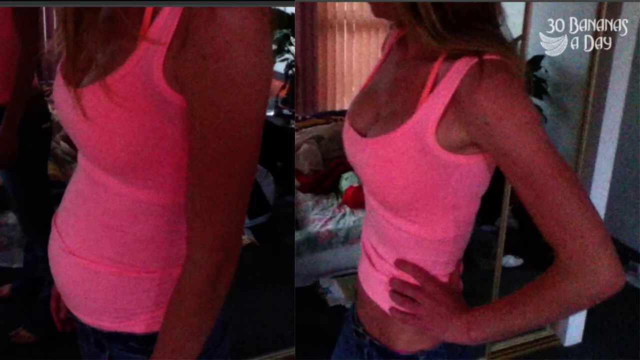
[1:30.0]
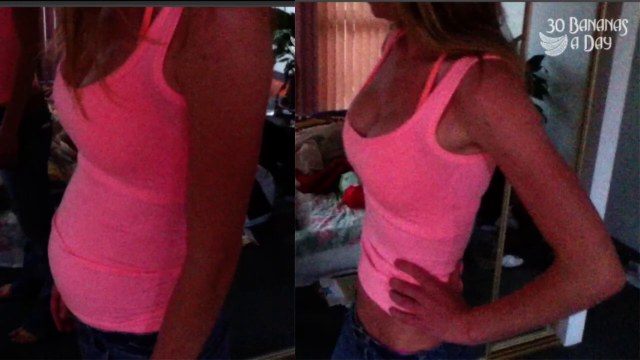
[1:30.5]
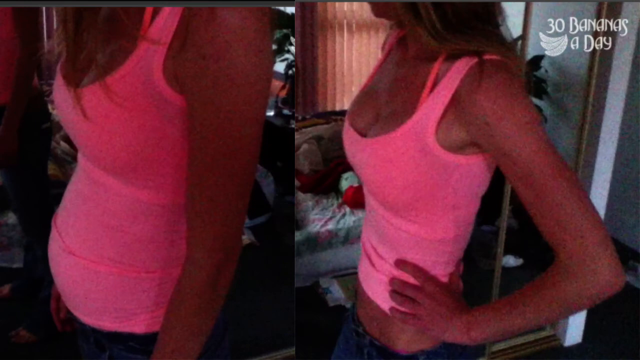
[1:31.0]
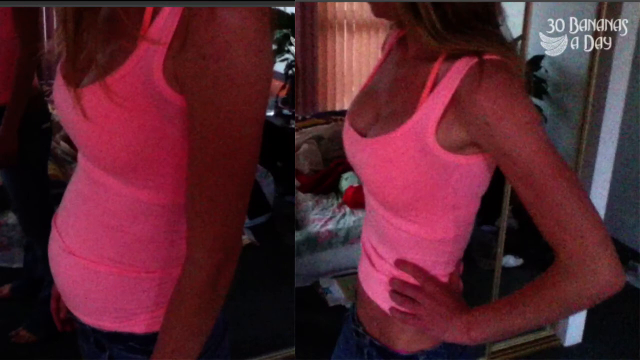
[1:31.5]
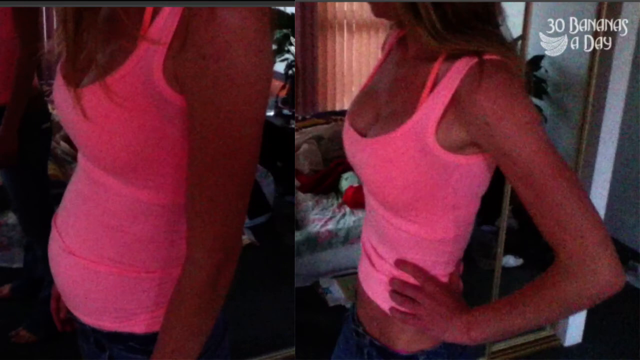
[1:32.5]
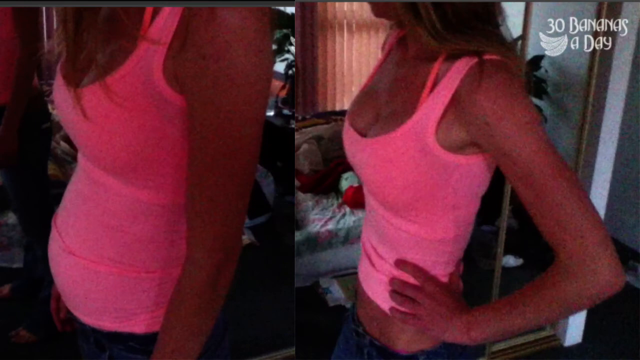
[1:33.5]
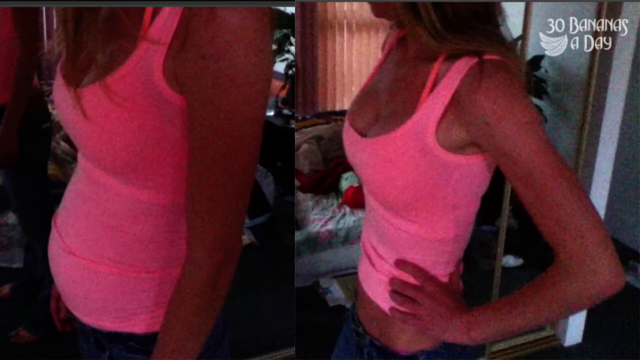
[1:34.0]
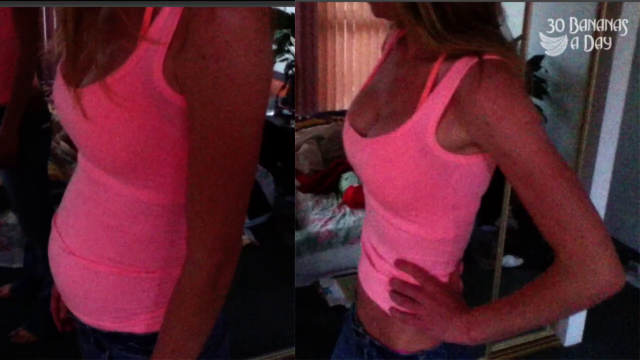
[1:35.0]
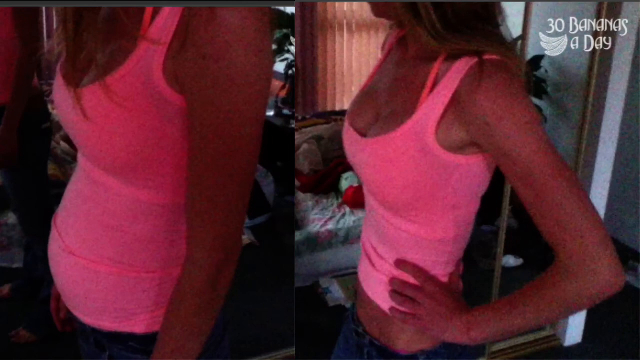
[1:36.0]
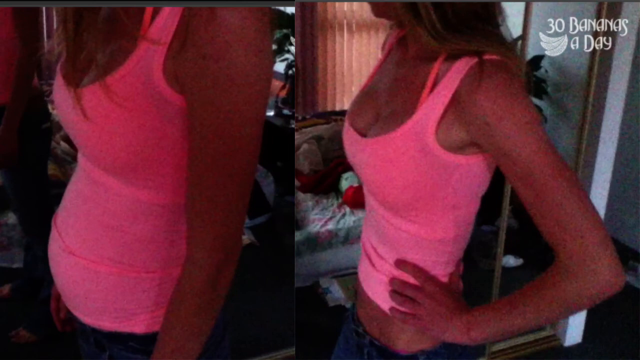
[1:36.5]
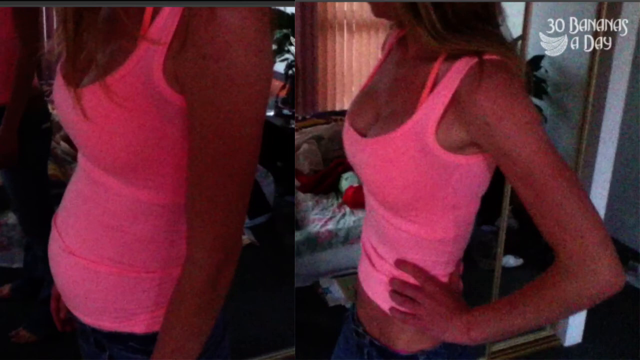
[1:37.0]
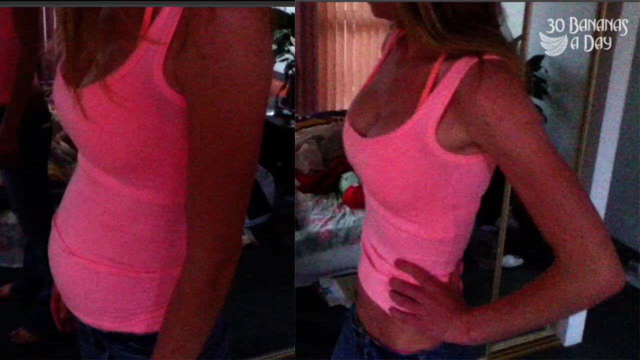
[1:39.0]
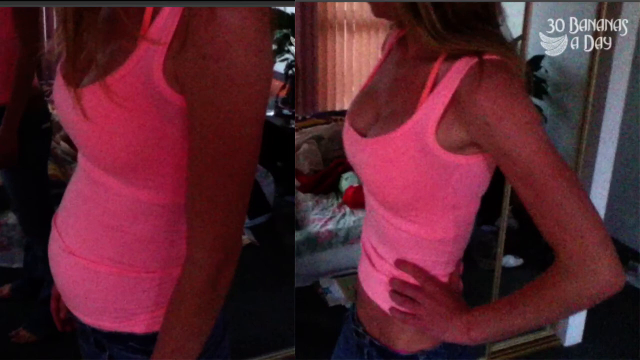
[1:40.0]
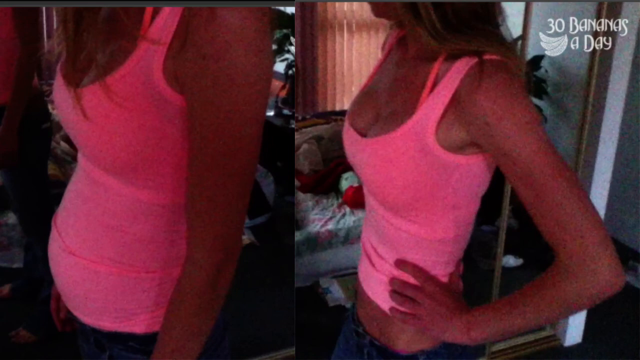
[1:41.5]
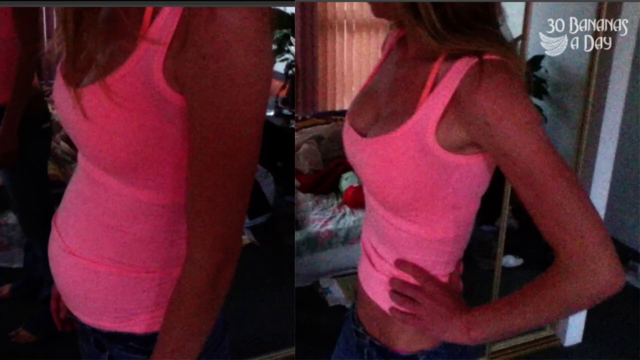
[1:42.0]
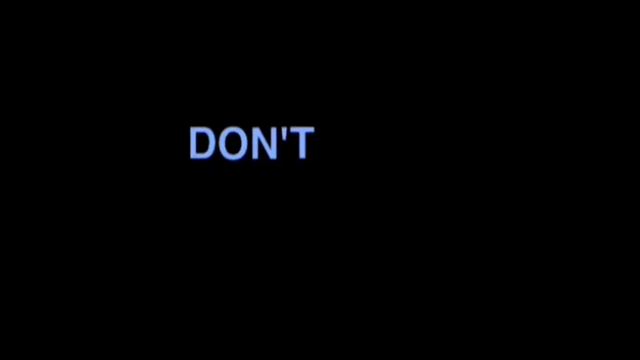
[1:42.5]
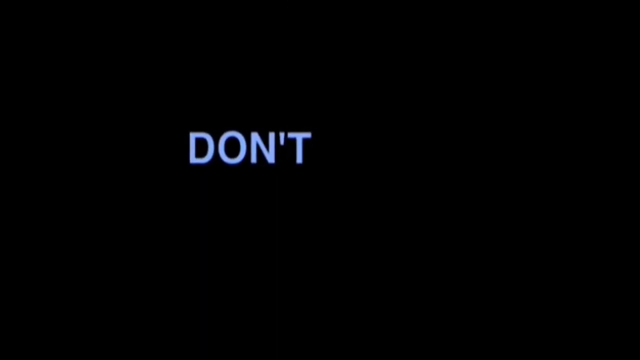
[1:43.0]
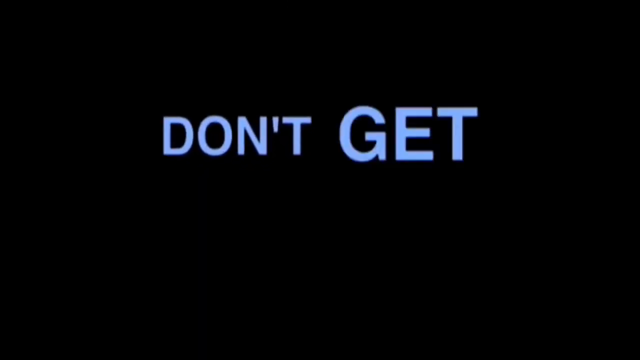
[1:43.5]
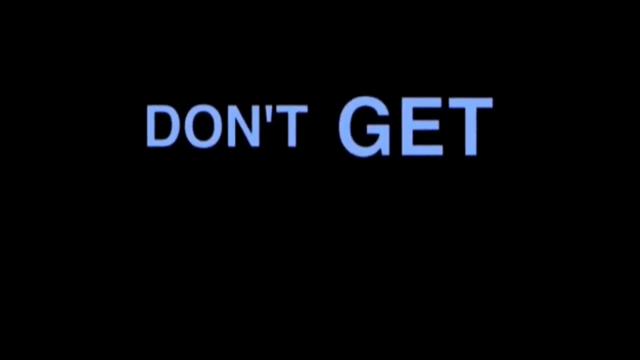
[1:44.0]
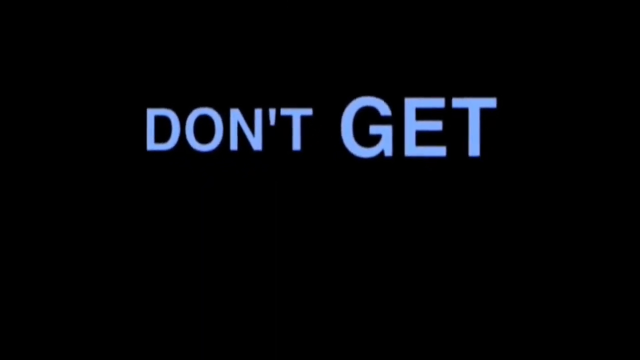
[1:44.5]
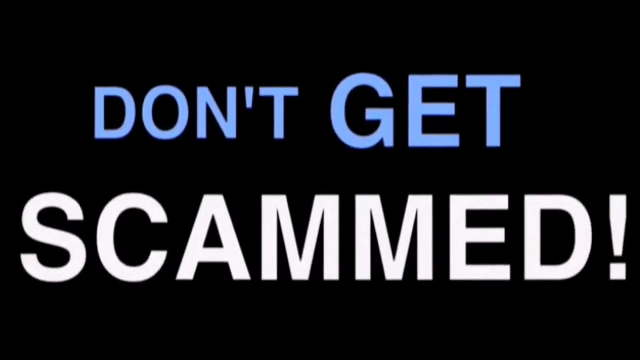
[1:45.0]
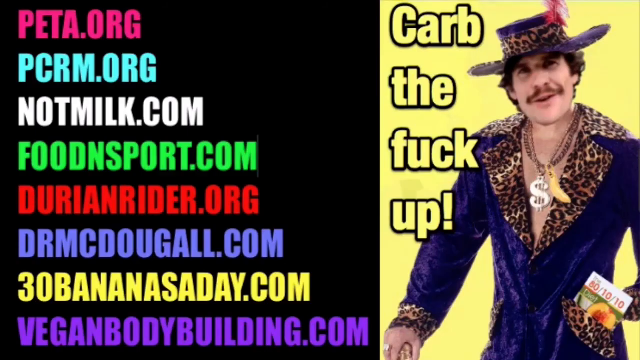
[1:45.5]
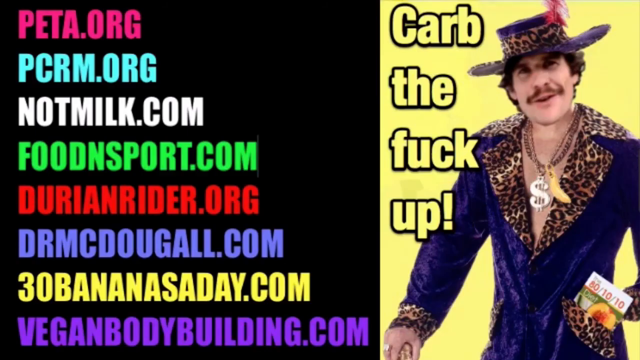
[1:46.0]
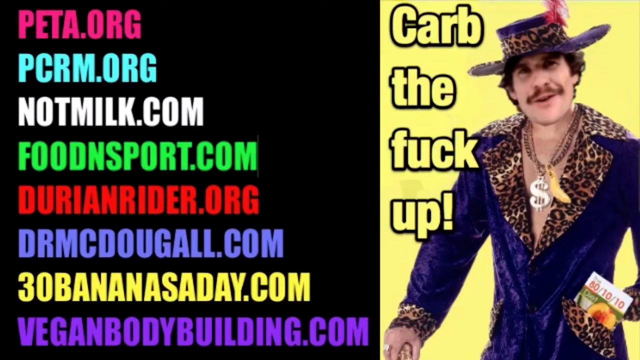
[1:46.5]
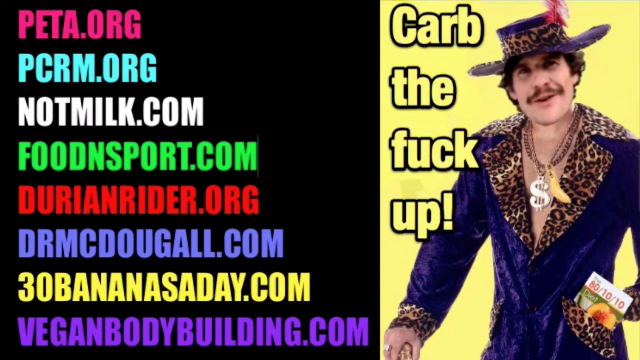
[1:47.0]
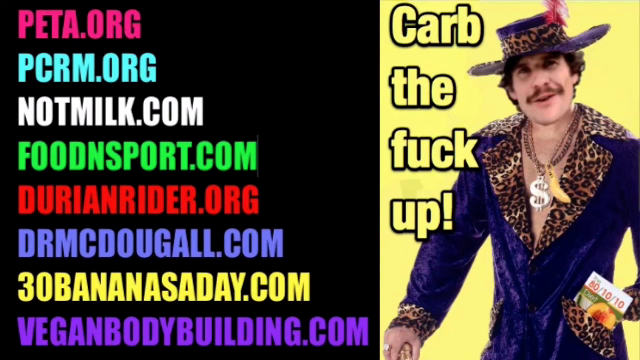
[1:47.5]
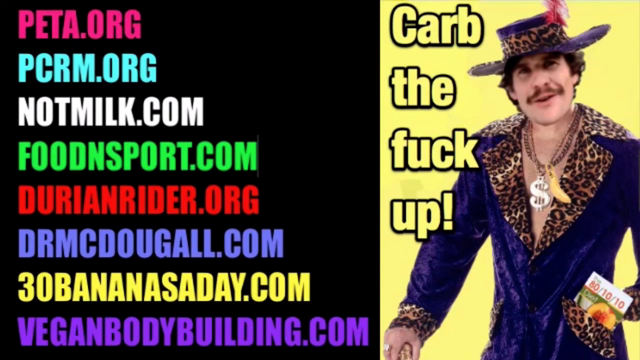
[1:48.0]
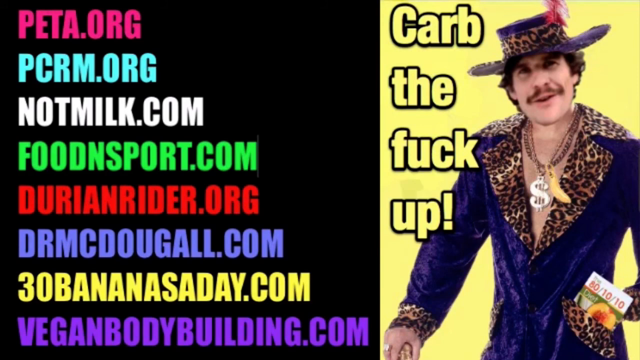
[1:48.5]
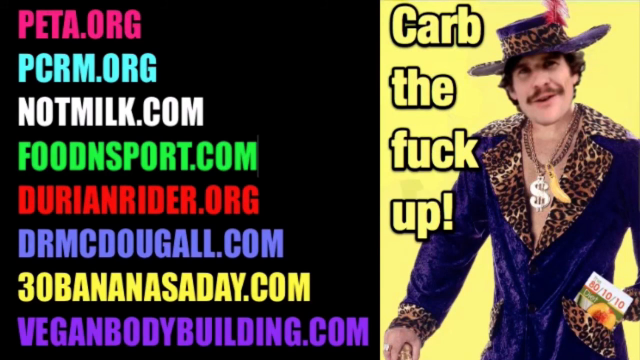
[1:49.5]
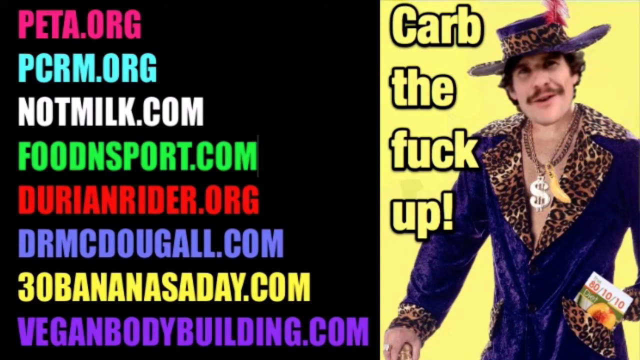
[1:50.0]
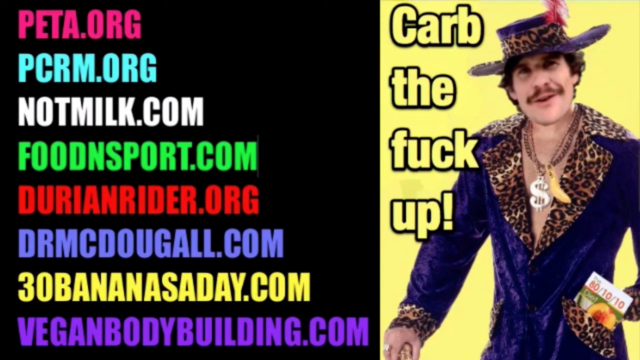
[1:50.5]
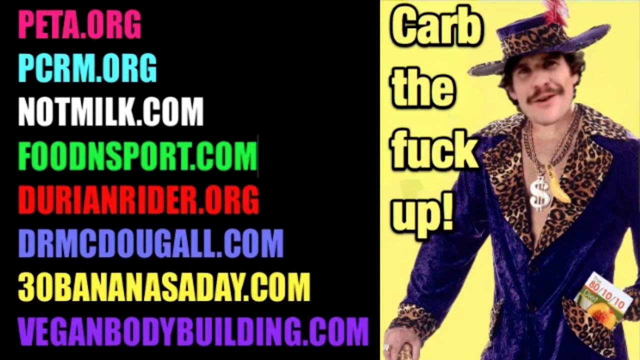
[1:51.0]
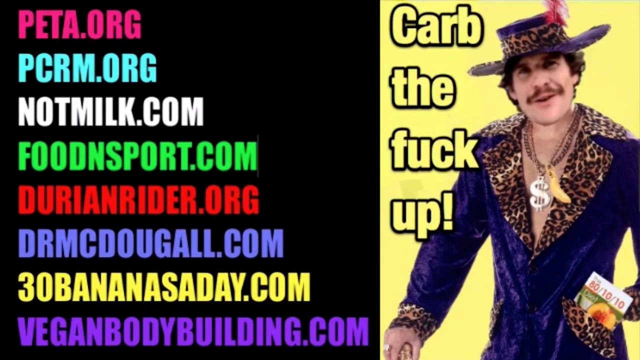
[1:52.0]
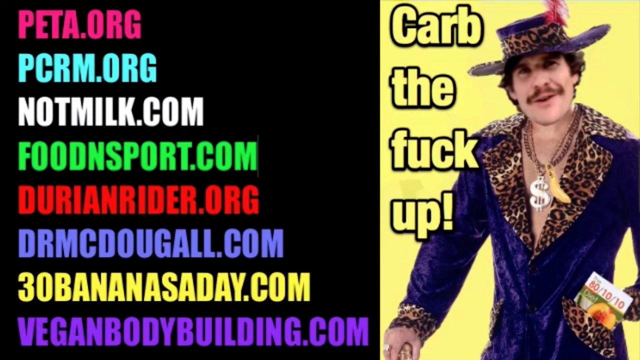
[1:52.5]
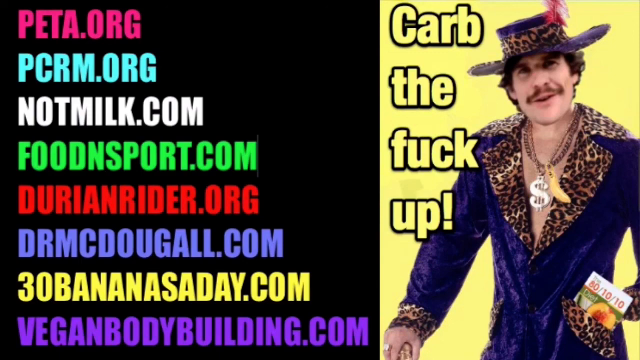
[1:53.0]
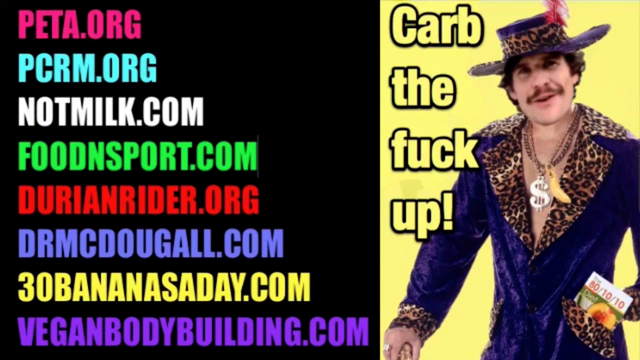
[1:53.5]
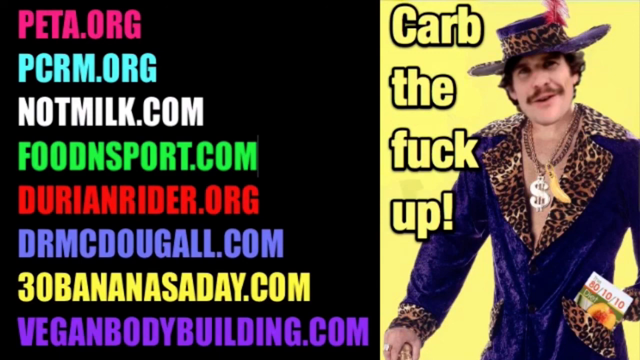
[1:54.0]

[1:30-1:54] A white woman wears a pink top with a pink strap around her neck and blue jeans, and has long brown hair. In the top right of the image on the right-hand side, text says "30 bananas", followed by an image of three bananas and "a day". A mirror with a brown, goldish frame is on her right side, reflecting brown and light brown shades covering the window and a white bed with clothing strewn all over it. The carpet seems to be blue, and there is a white wall on the right side. The image on the left shows the same person in side view with a bit of a pouty stomach, while in the image on the right she has a more slimmed-down stomach. In the right image her hands are on her waist; in the left image her hands are by her side. The screen then goes black, and lettering appears: "don't get" in blue at the top and "scammed" in white below. On this black background, on the right side, there is a yellow box, and to the left of this box lettering in a black outline reads "carve that fuck up". On the right side is an image of a white man with a brown mustache and brown hair, wearing a purple jacket, a purple hat, and a leopard skin collar that is also strapped around his purple hat. A small booklet in his pocket has orange lettering reading "80/10/10", and he wears a silver dollar sign and a yellow banana around his neck. Lettering on the left side reads, line by line: "pita.org" in pink, "pcrm.org" in light blue, "notmilk.com" in white, "foodandsport.com" in lime green, "durinrider.org" in red, "drmcdougal.com" in light purple, "30bananasaday.com" in yellow, and "veganbodybuilder.com" in purple.